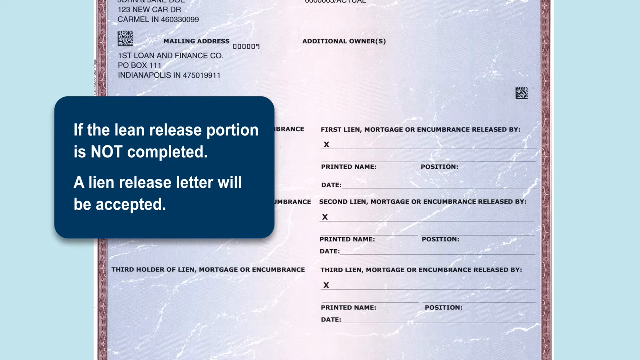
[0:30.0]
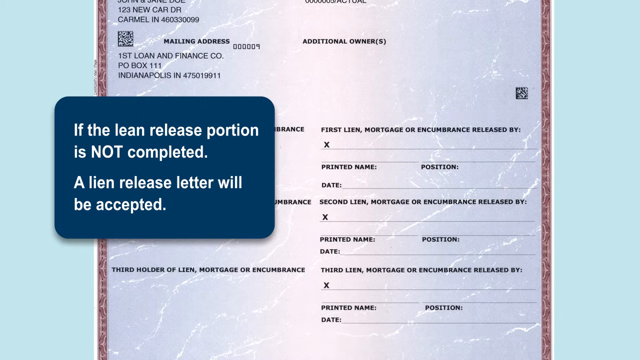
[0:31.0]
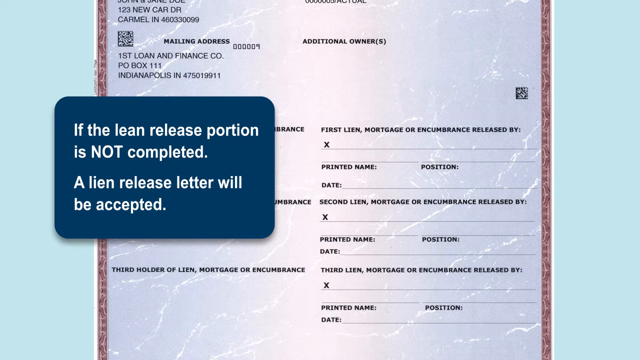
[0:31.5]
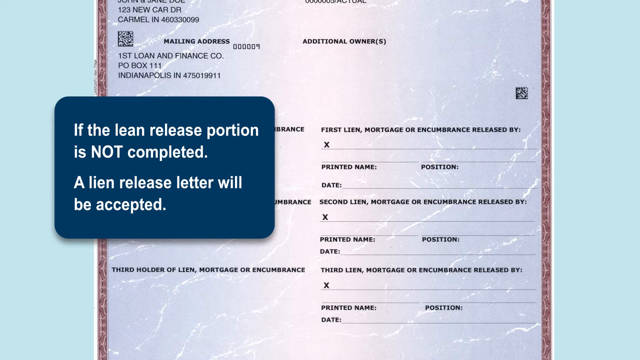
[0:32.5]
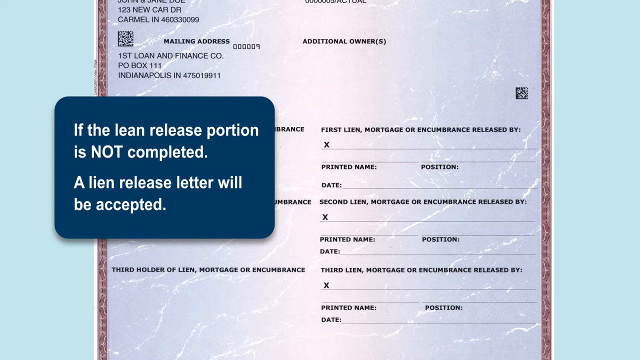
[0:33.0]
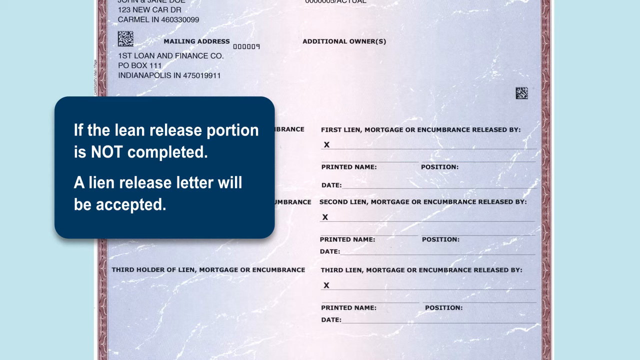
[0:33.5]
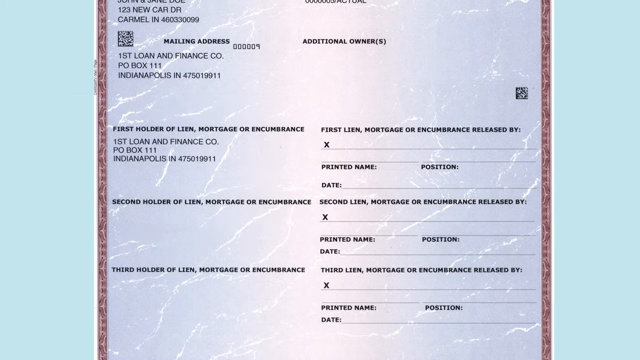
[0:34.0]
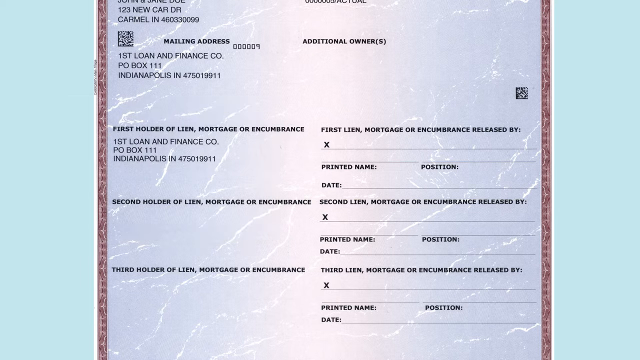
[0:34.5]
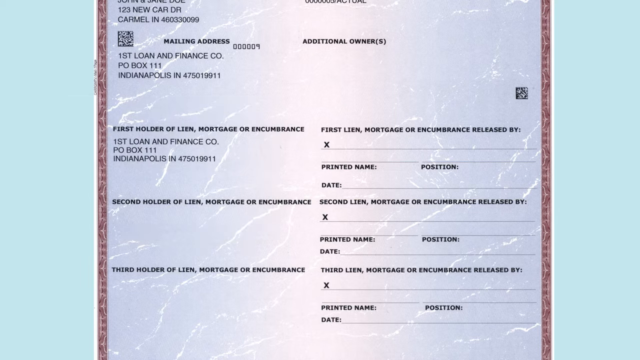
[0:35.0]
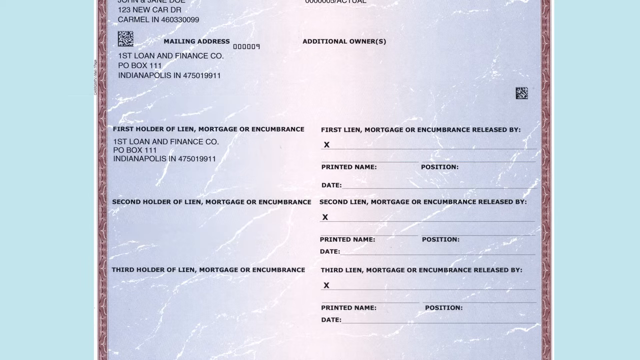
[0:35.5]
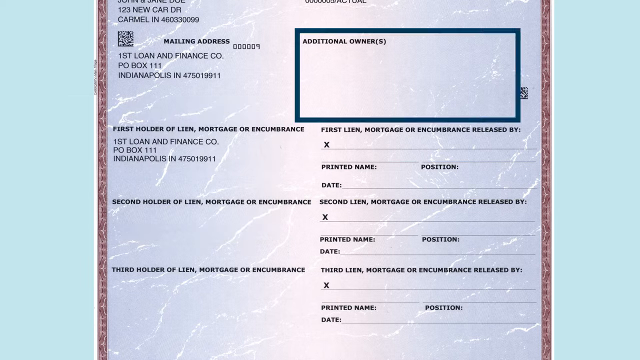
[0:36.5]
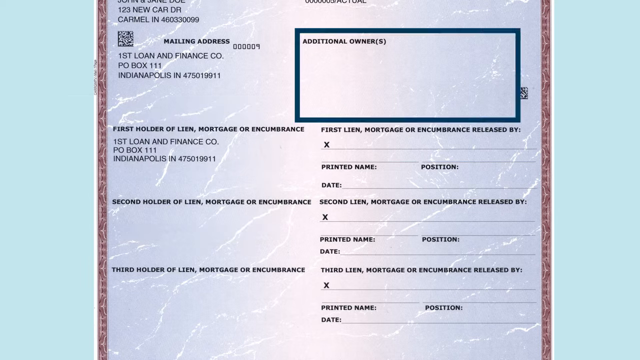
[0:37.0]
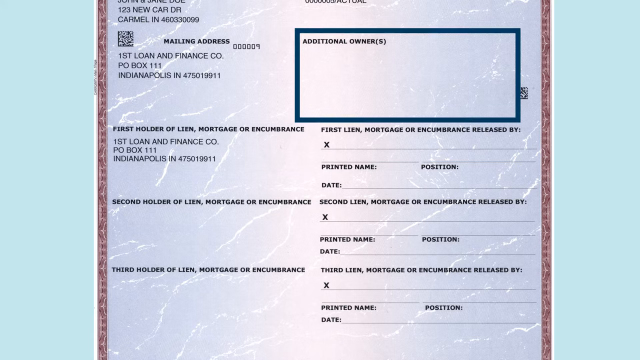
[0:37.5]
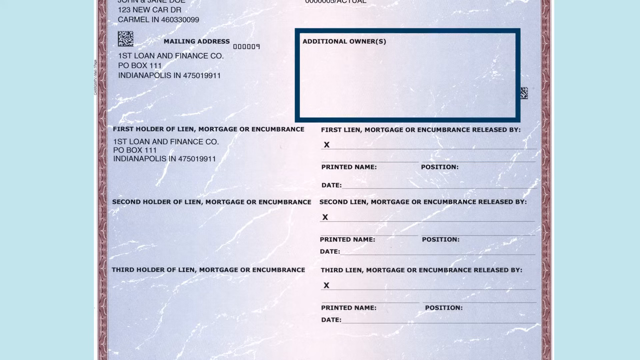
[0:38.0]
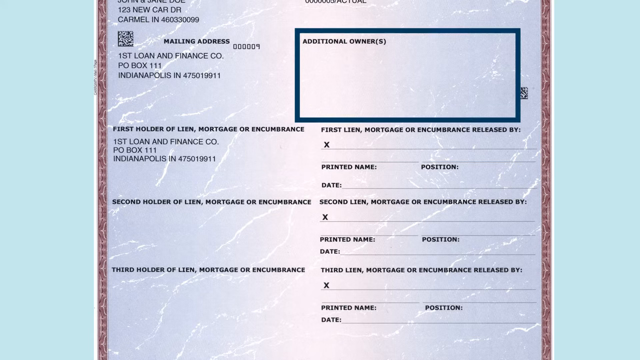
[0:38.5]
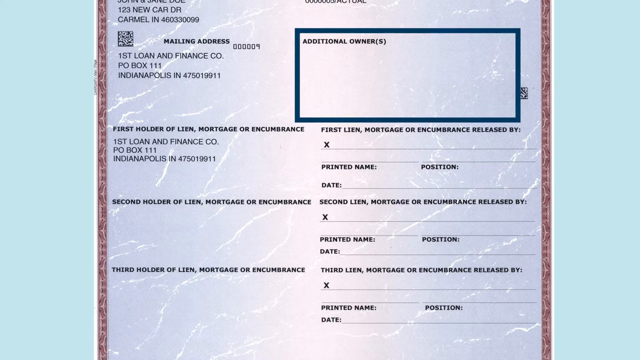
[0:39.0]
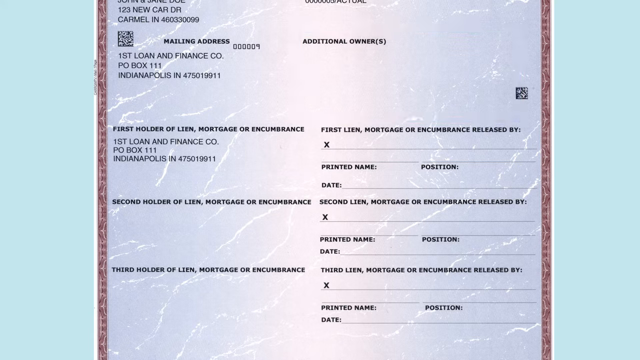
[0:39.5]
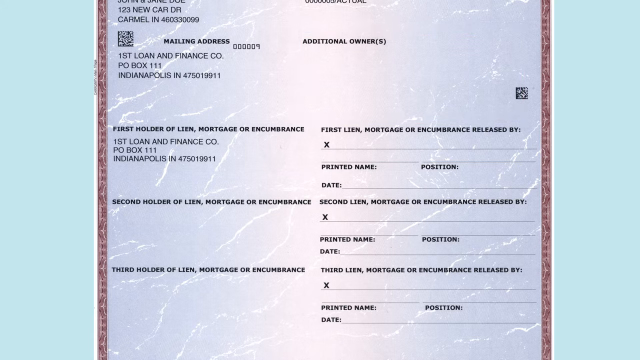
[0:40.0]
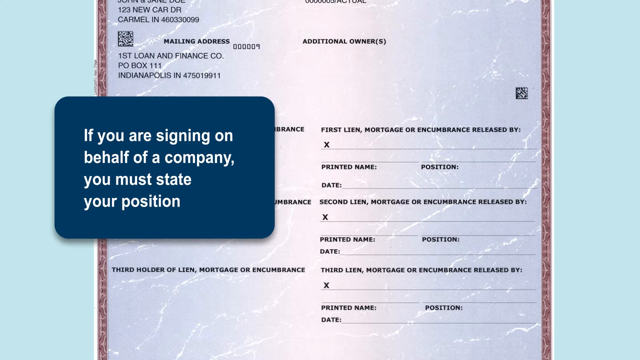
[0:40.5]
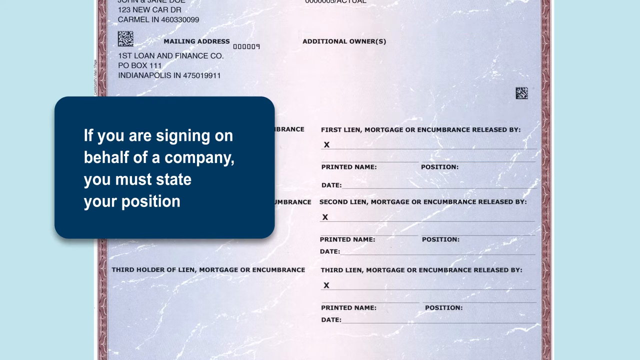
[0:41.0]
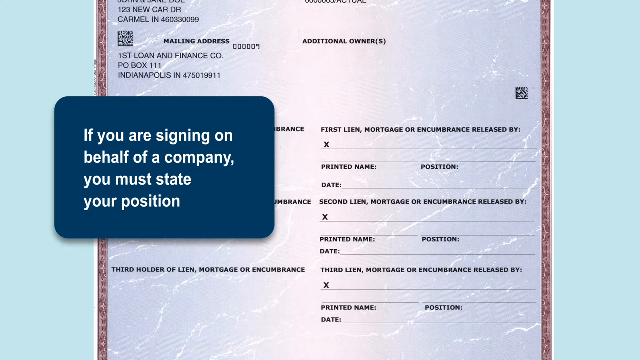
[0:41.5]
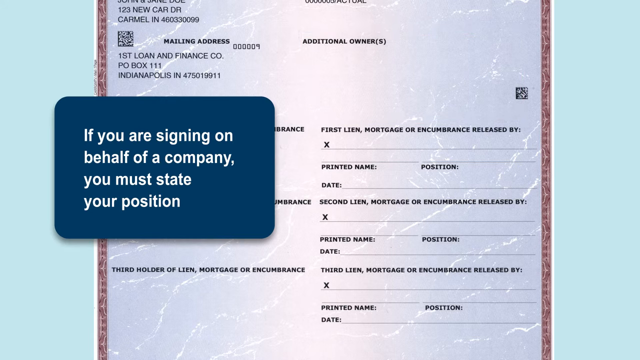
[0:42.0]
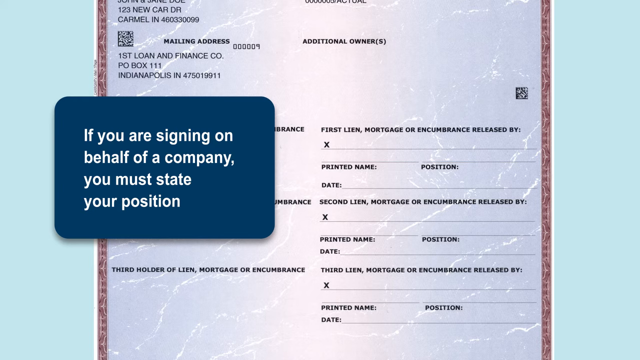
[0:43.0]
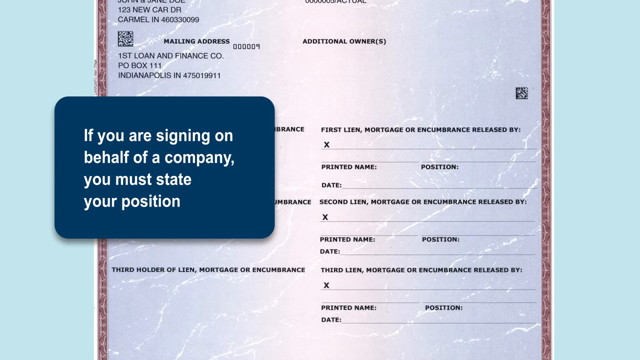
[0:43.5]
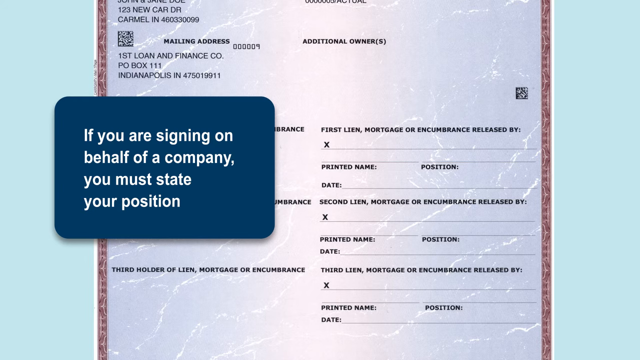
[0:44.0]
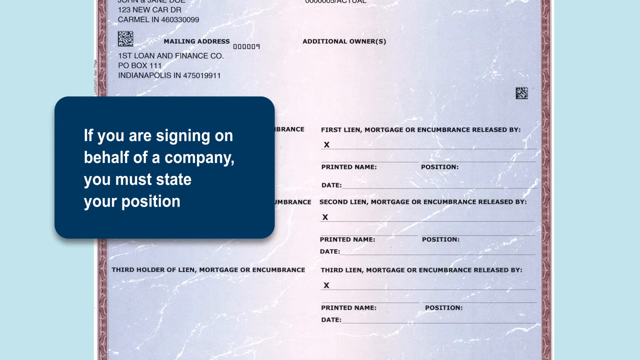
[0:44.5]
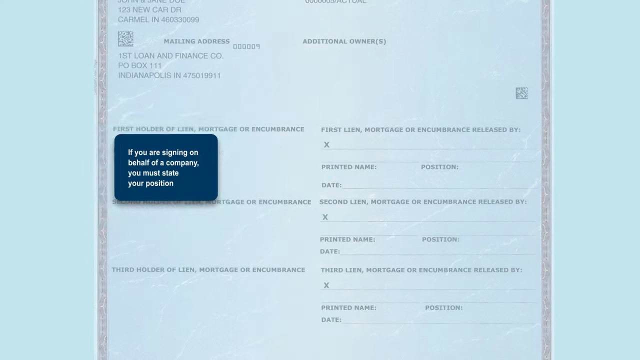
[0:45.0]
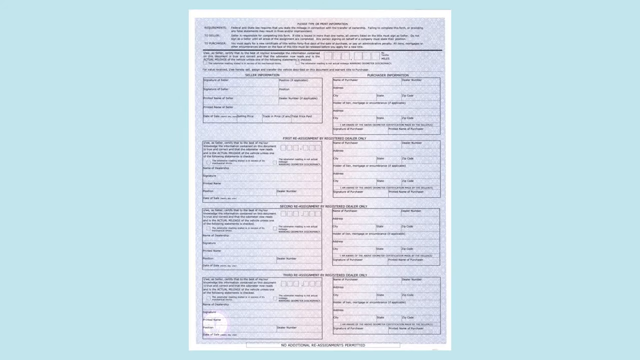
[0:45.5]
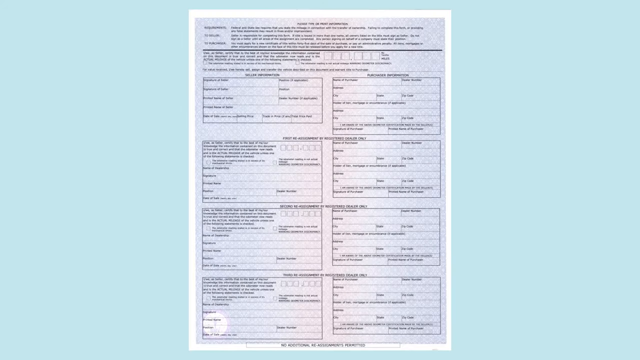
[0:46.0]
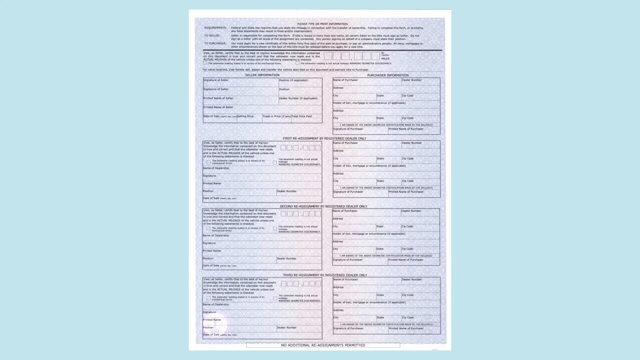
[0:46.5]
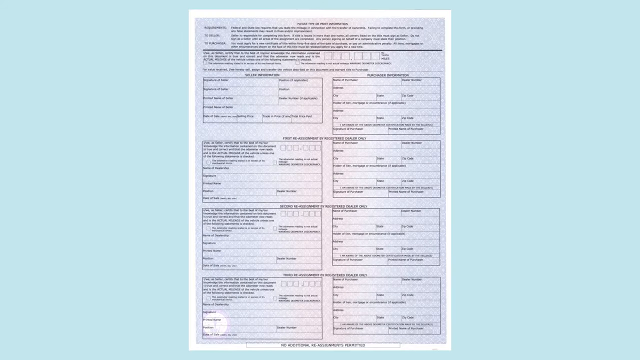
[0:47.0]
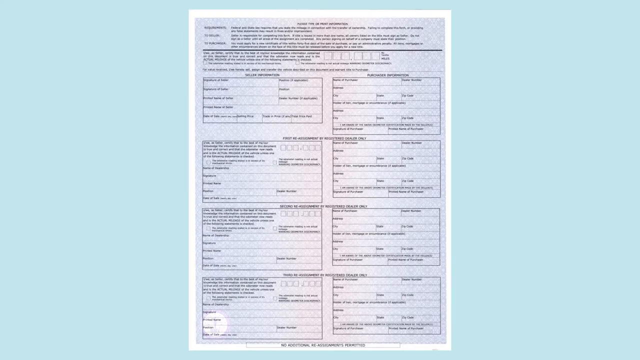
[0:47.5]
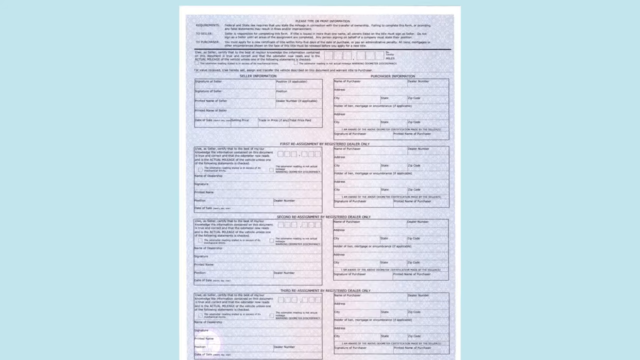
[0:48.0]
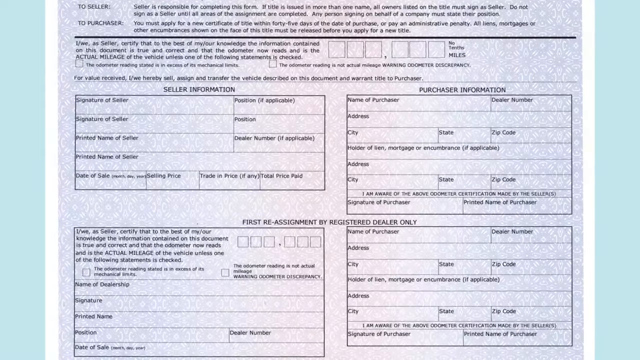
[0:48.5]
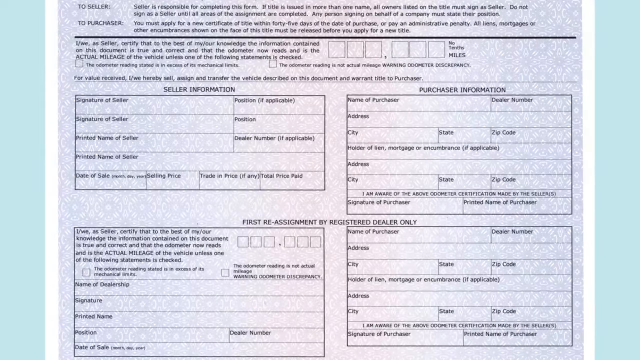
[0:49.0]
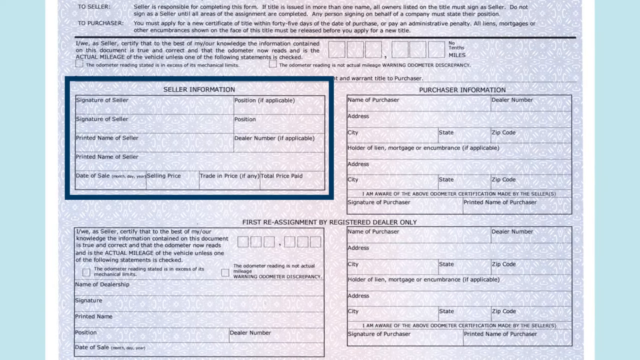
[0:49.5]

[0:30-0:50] The certificate of title remains in the background. A navy blue rectangular pop-up box appears with white text reading "if the lien release portion is not completed, a lien release letter will be accepted." The box disappears, and a dark blue outline appears around additional owners. A pop-up box on the left side of the screen then says "if you are signing on behalf of the company, you must state your position." That box leaves the screen, and a different image of the certificate of title appears; it seems to be the back of the certificate, though the image is very small. The view zooms in on the certificate, and it does look like the back of the certificate. A pop-up then says "if the lien release portion is not completed. A lien release letter will be accepted."